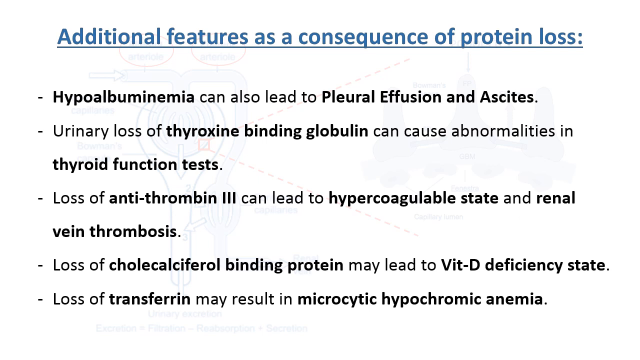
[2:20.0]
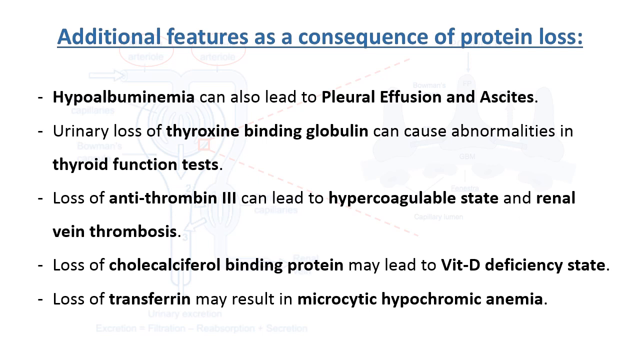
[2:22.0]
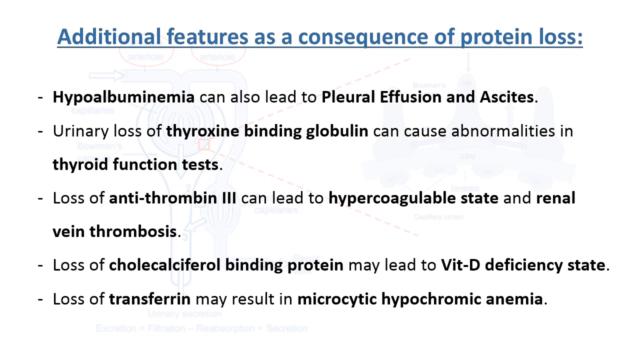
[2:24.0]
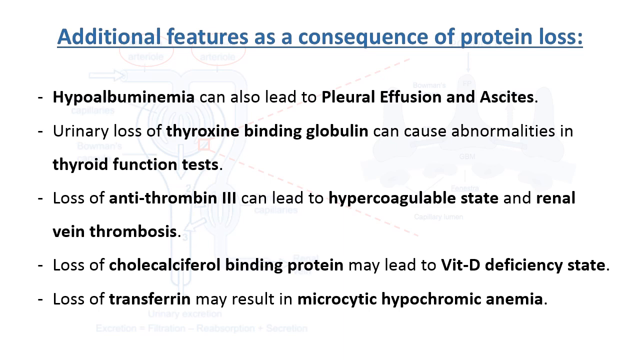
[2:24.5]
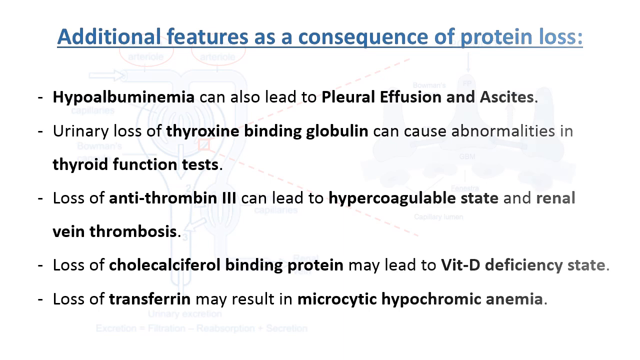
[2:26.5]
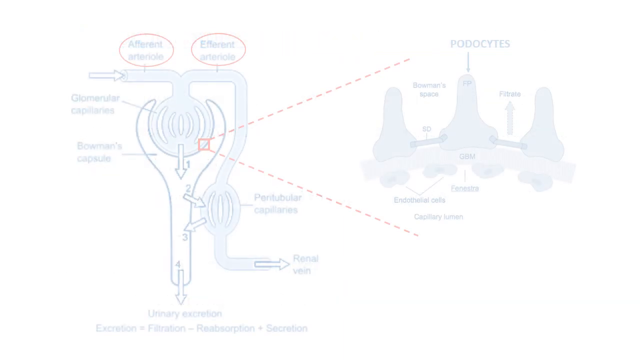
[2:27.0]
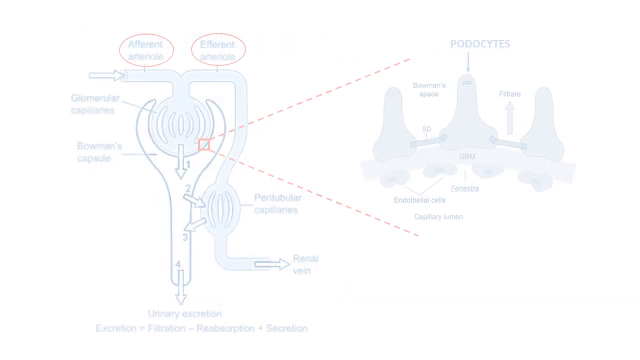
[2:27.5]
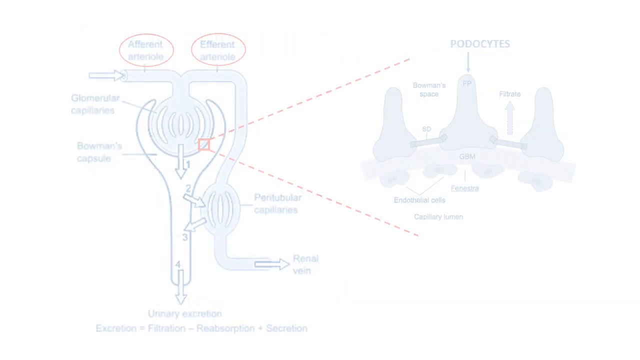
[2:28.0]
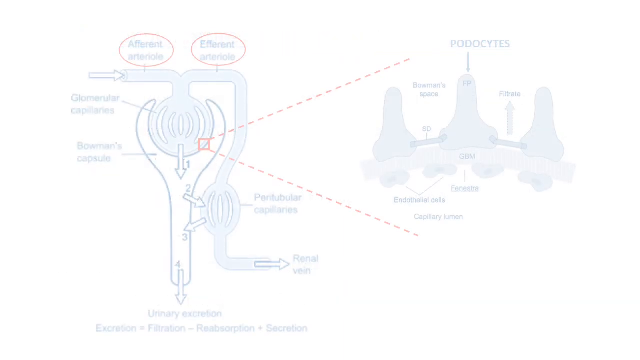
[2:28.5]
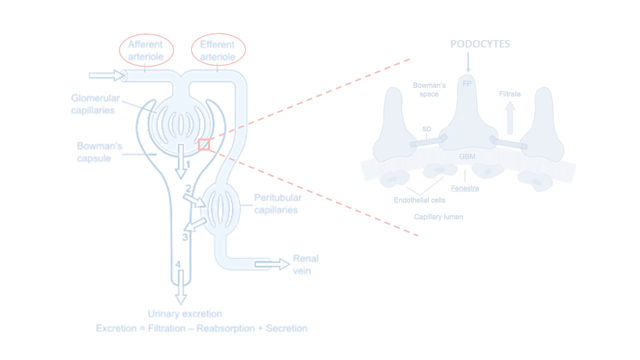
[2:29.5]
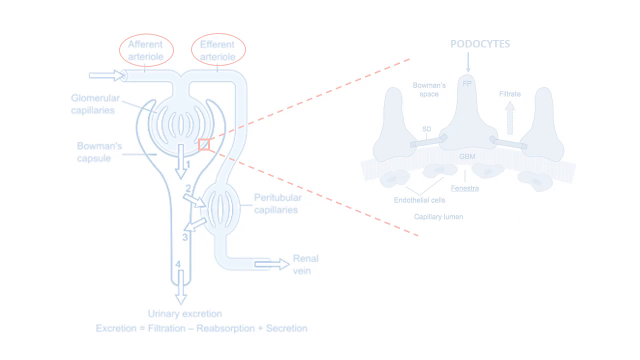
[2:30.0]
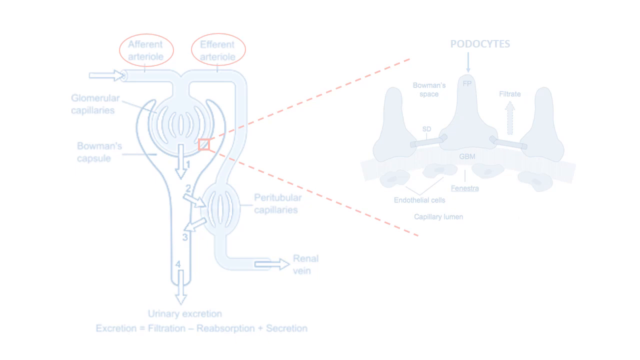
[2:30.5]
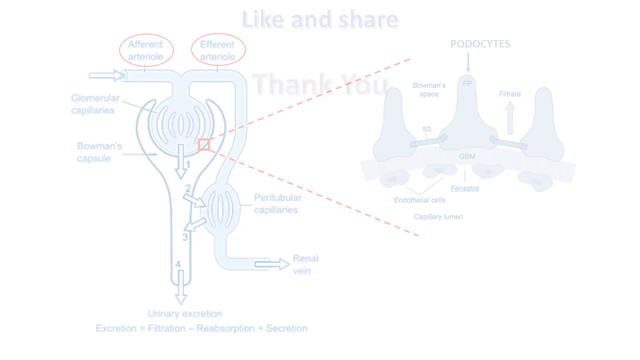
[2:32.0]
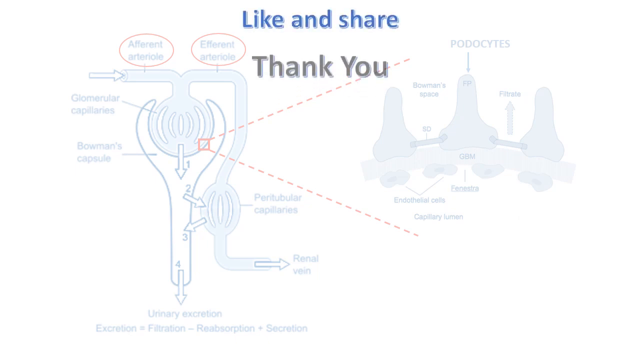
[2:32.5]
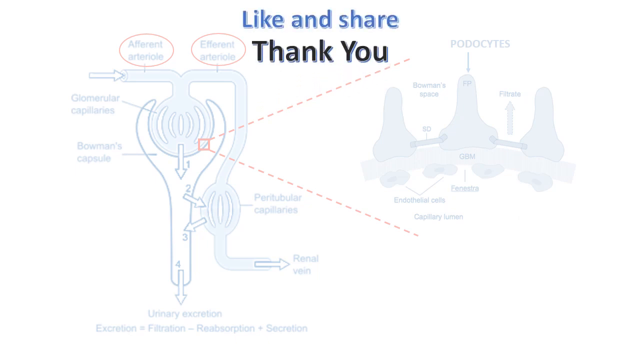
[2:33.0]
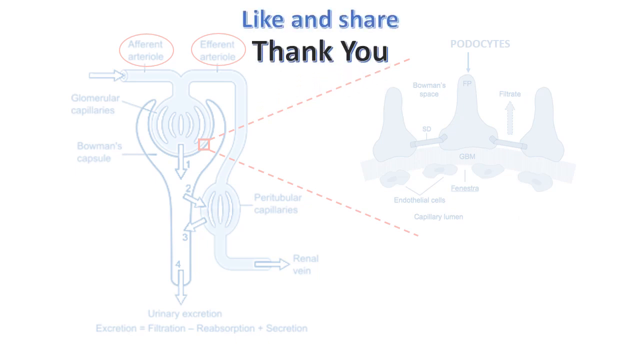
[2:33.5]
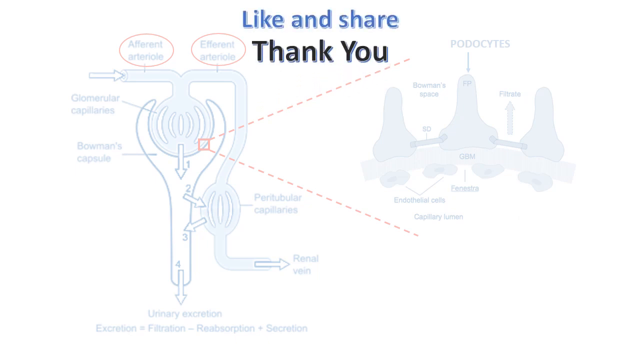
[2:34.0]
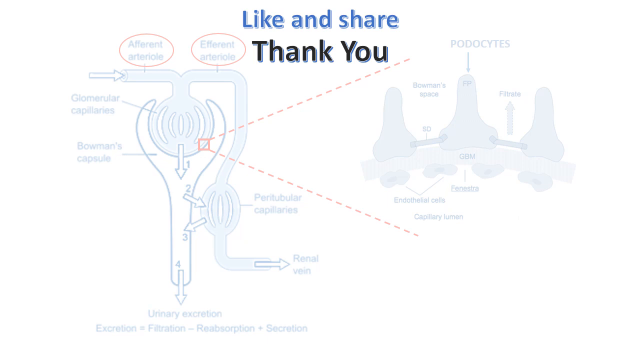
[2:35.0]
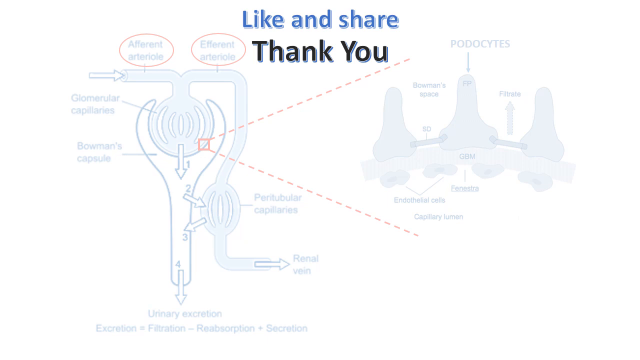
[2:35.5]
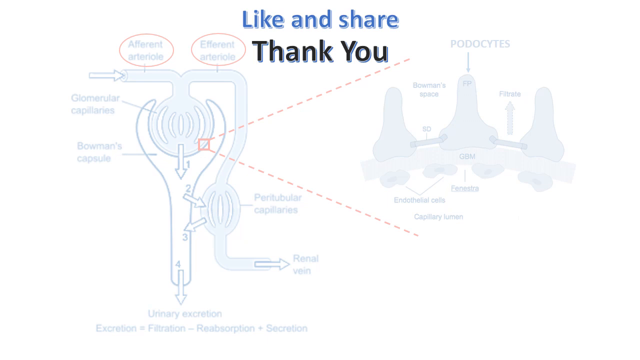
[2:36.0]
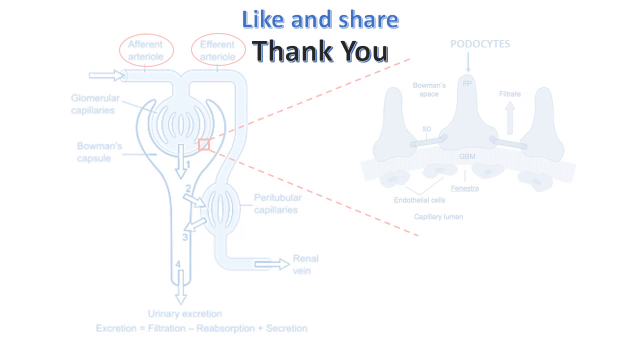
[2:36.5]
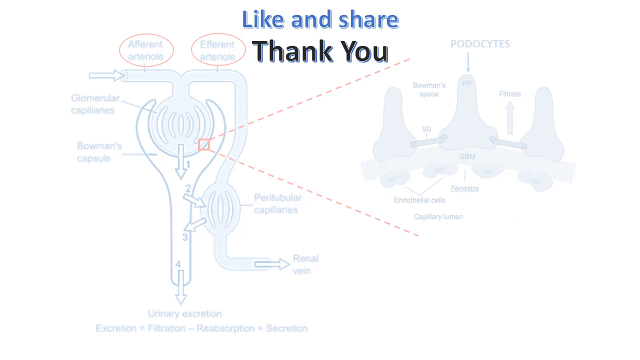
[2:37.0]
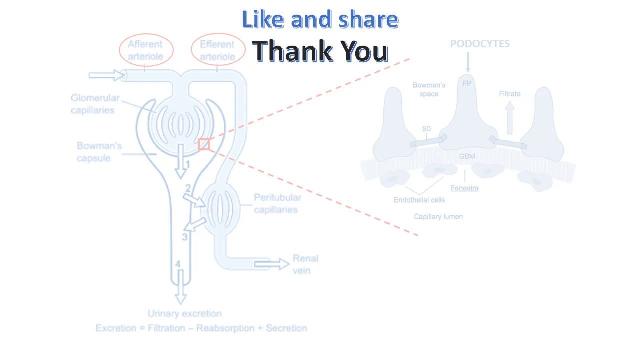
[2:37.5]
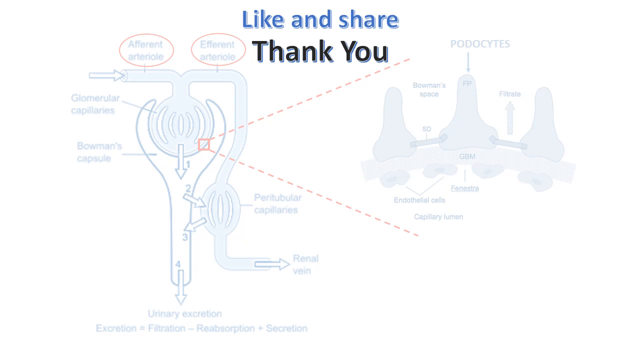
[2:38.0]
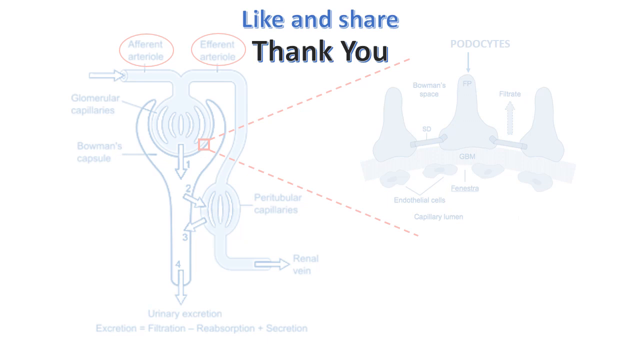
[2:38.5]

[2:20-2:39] The page with "additional features as a consequence of protein loss" at the top remains, with five bullet points on a white background and the faint diagram from the beginning of the video visible behind. After staying on that screen for several more seconds, the screen goes back to the faded image of the diagrams: the one on the left showing the glomerular capillaries and the renal vein, and the one on the right with the podocytes. Text appears on that screen: "like and share" in blue at the top, and "thank you" in black underneath.